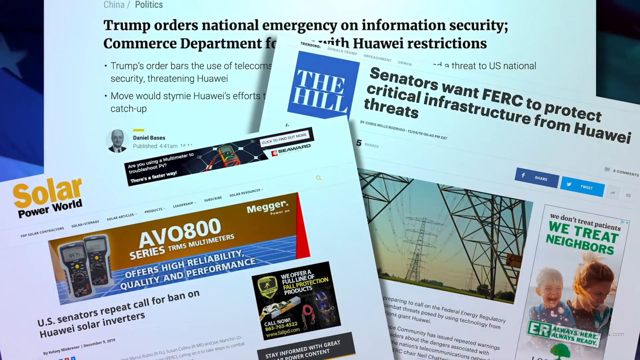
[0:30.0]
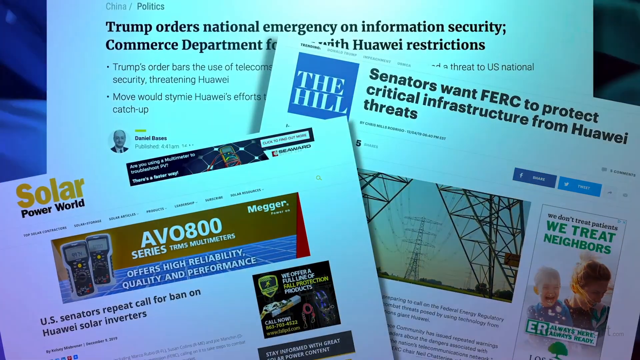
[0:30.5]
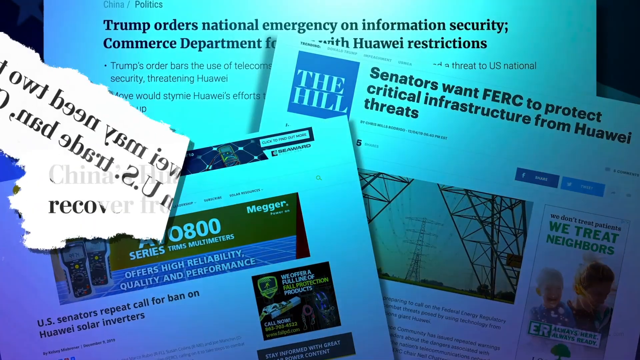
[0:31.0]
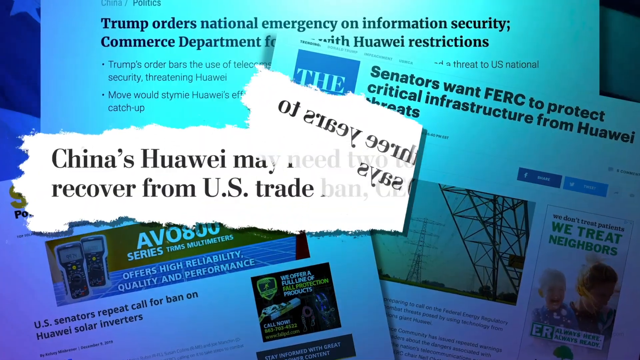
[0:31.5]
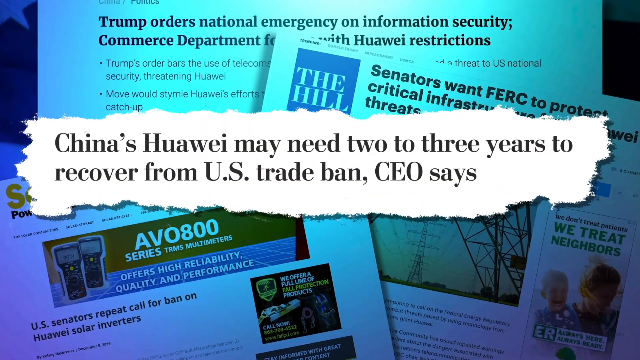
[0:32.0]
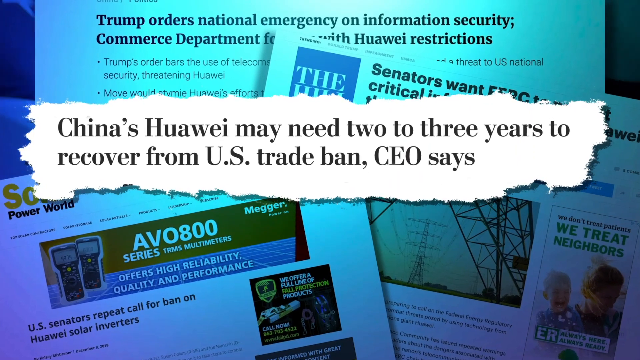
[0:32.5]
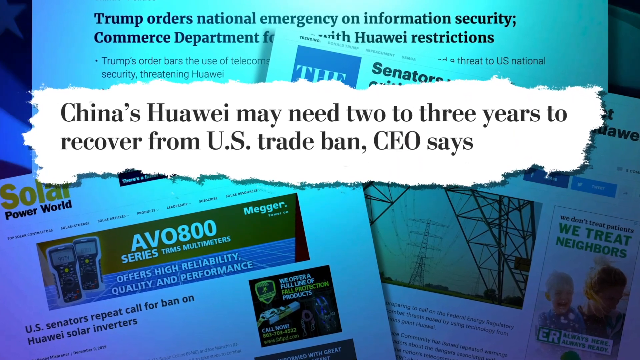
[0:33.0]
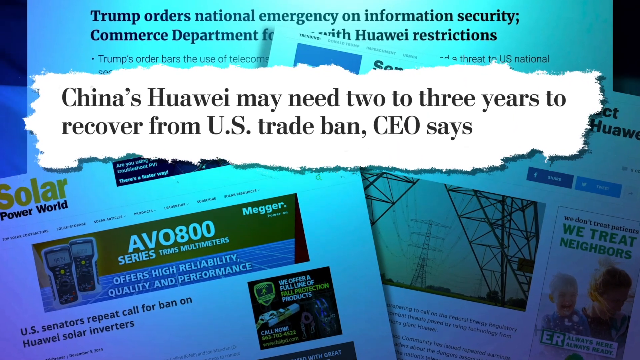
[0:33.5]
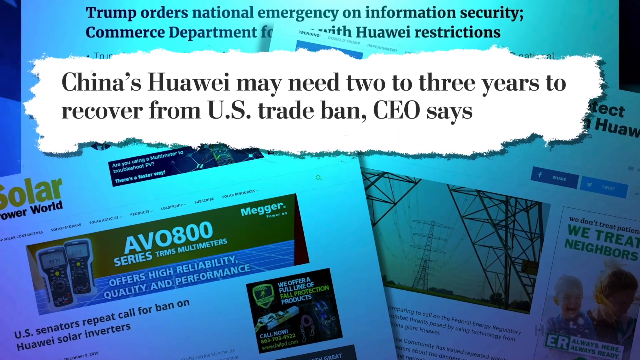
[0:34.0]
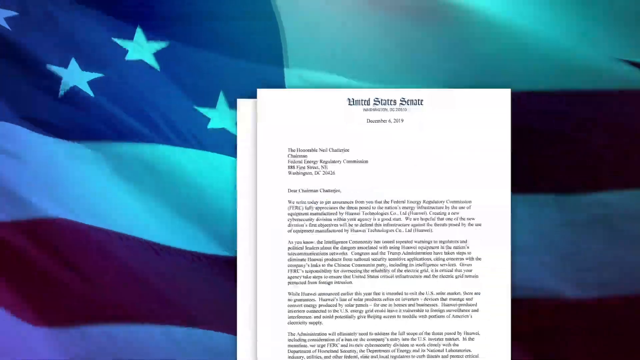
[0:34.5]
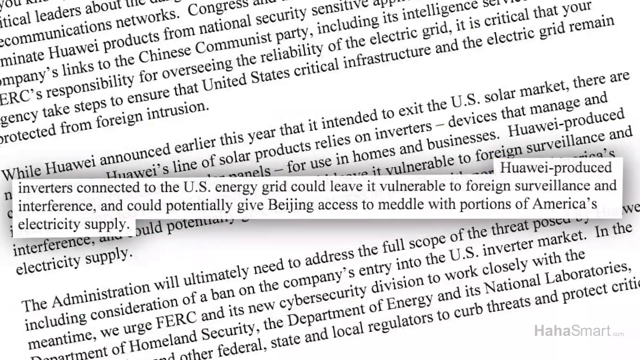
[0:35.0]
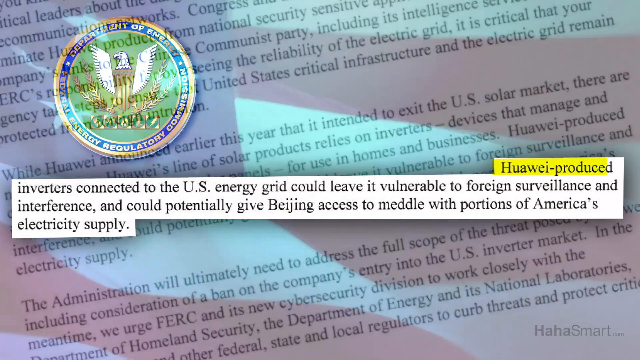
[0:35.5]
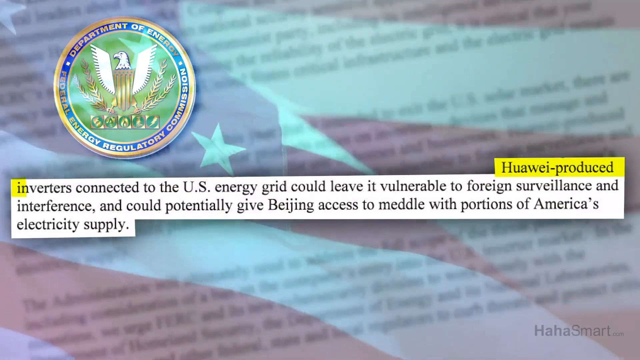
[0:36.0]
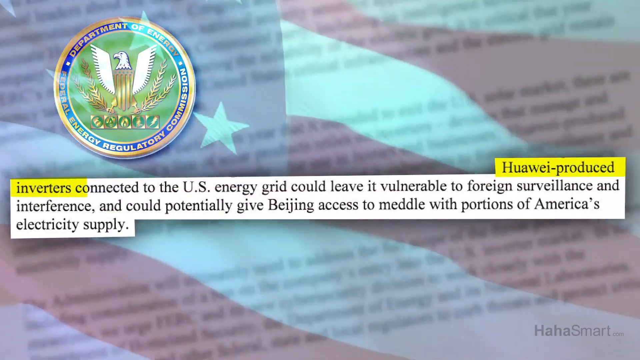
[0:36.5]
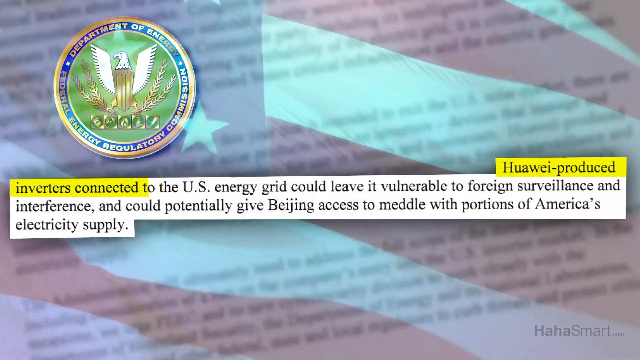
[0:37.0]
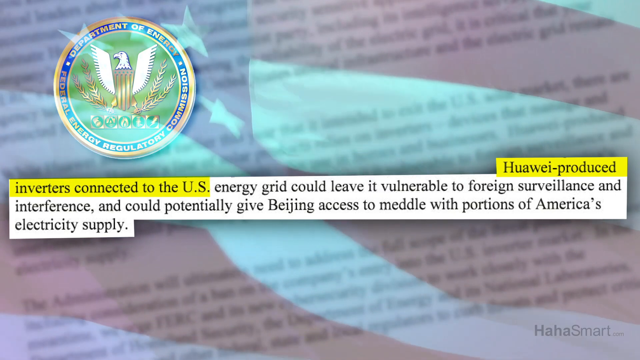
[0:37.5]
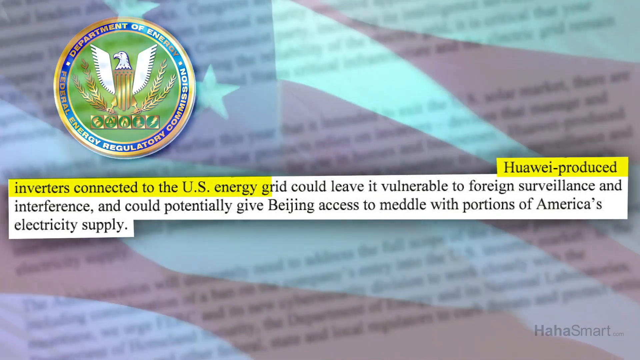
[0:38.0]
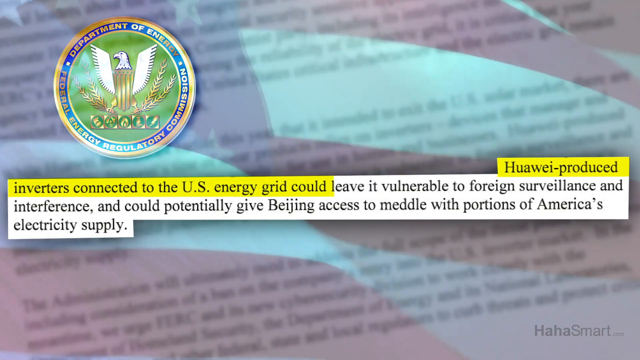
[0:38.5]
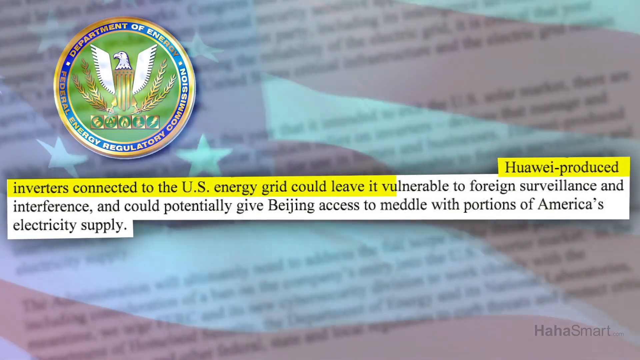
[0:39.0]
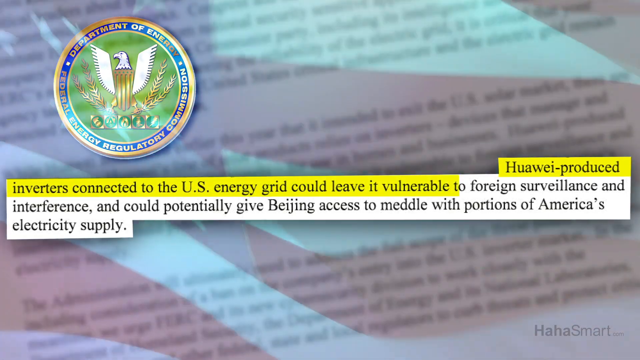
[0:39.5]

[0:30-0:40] The three articles are staggered but take up the entire screen. A paragraph from one of the articles is ripped out and comes to the front of the screen, reading "China's Huawei may need two or three years to recover from US trade ban, CEO says". It fades from the middle of the screen toward the top, and a new screen appears: a close-up of a letter with the United States flag waving in the background. Highlighted in yellow is "Huawei-produced inverters connected", and the rest of the text, not highlighted, reads "to the US energy grid could leave it vulnerable to foreign surveillances and interference, and could potentially give Beijing access to meddle with portions of America's electric supply". The letter is from the Department of Energy, with the seal above the text. The American flag waves in the background the whole time.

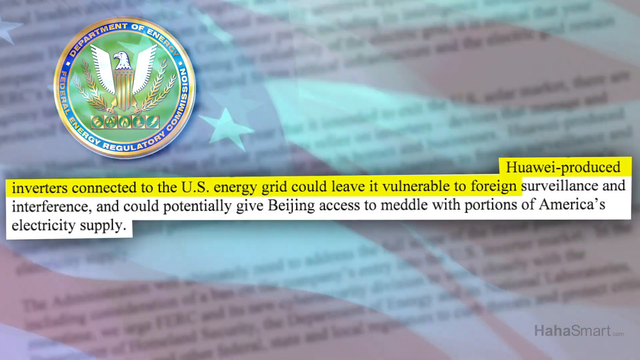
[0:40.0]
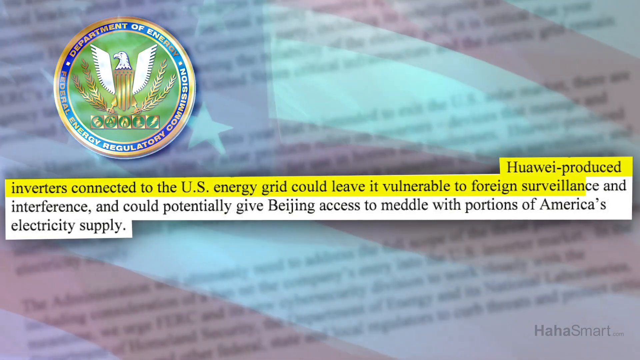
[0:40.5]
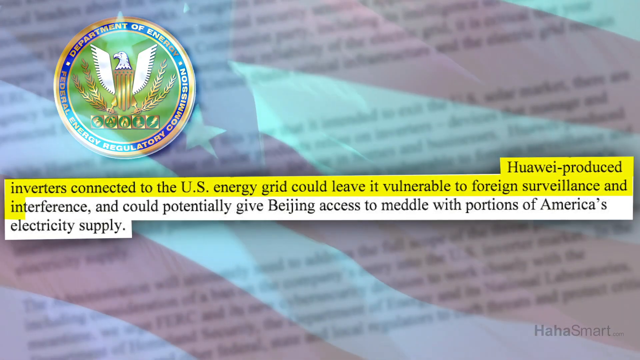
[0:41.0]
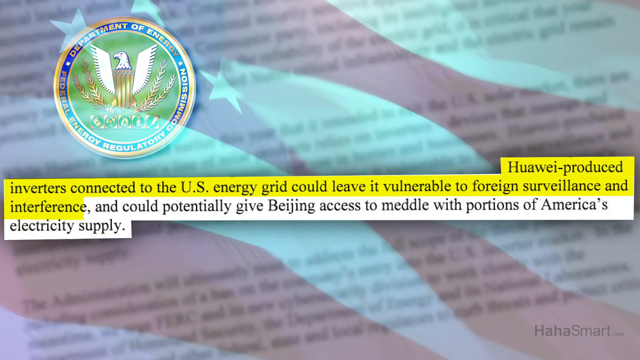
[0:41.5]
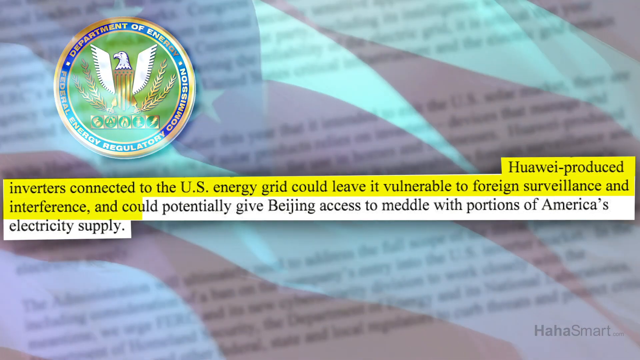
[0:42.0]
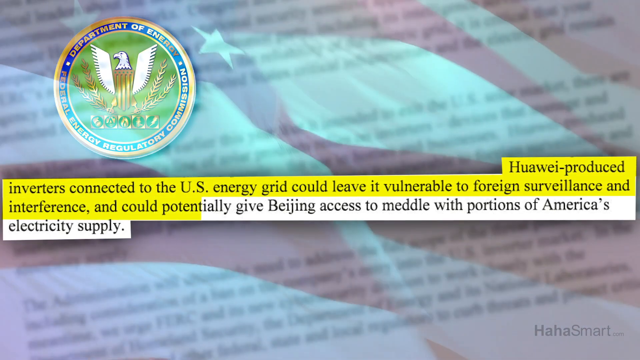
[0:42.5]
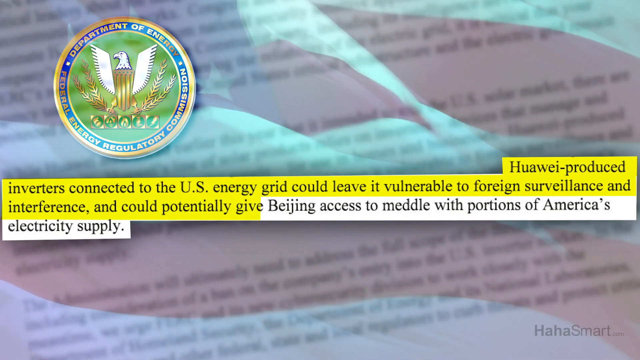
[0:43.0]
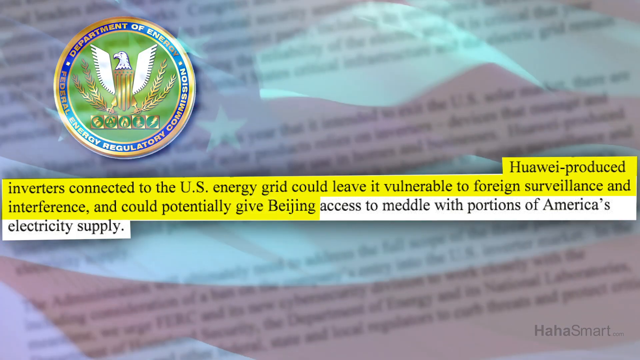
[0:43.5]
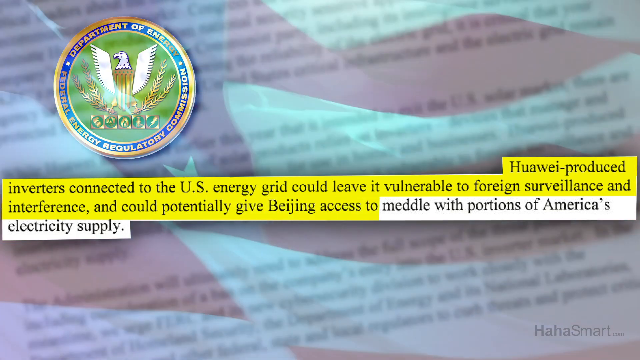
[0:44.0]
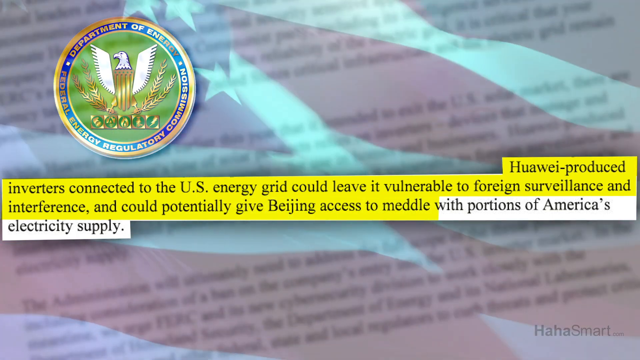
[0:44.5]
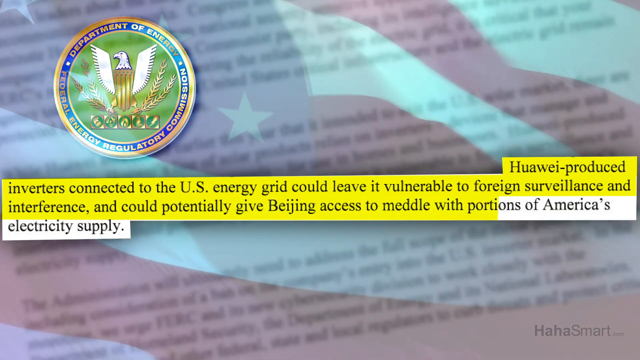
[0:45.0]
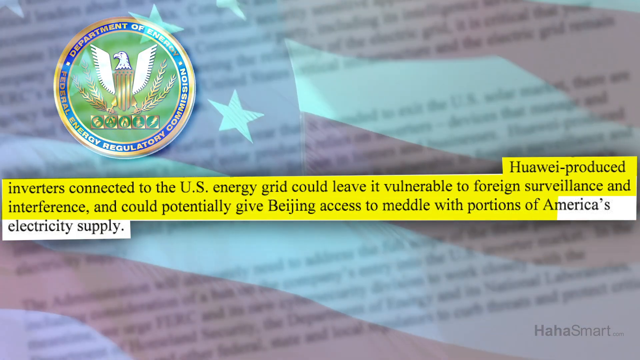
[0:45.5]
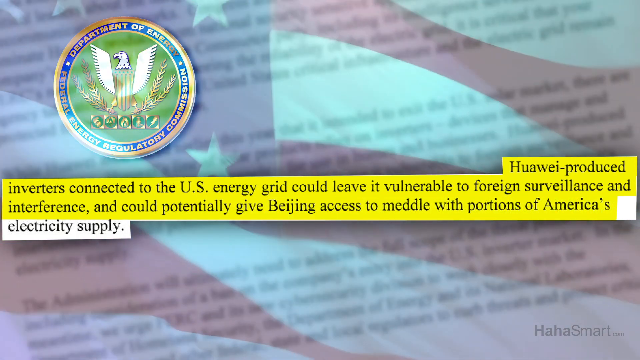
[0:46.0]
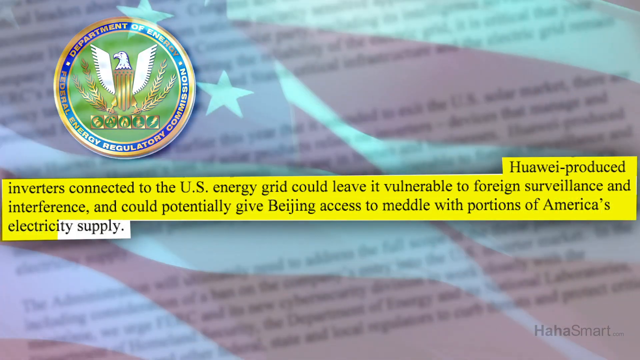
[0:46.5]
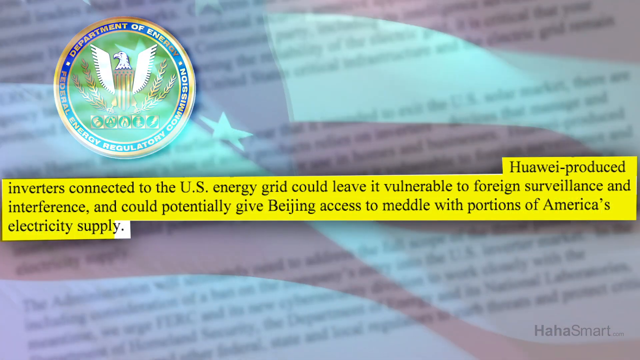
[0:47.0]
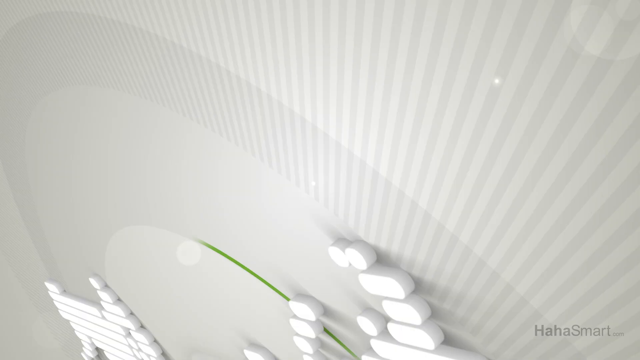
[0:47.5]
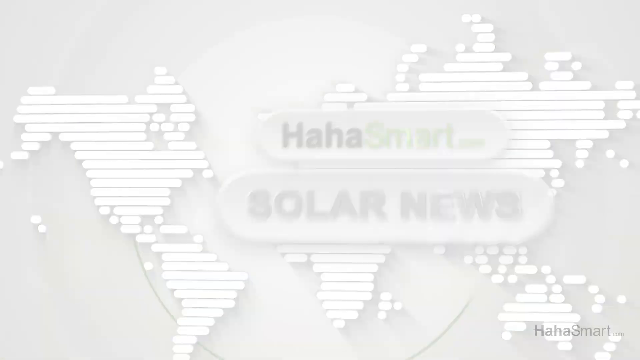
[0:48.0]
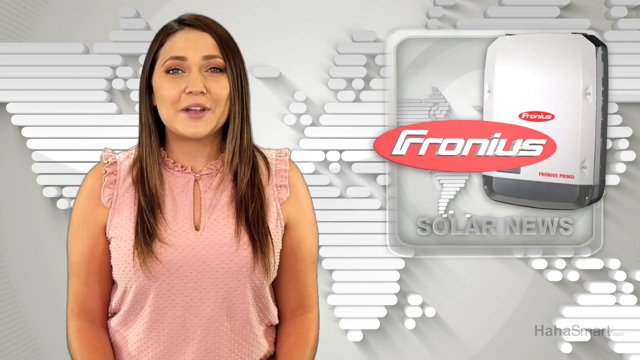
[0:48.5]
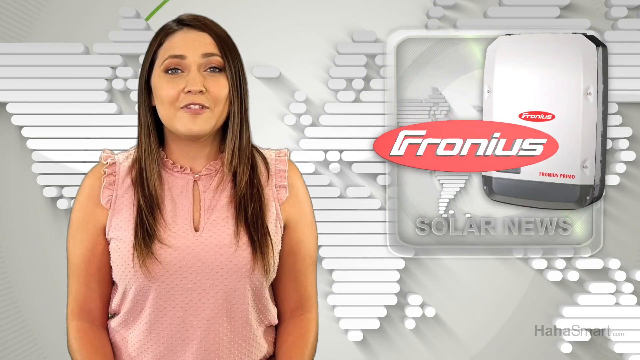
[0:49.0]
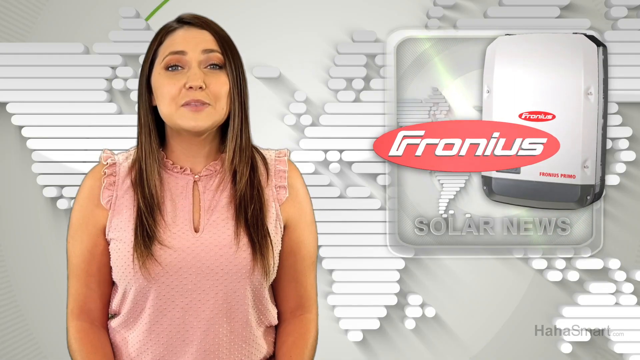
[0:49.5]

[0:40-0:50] The same text appears with the American flag waving in the background. The text is highlighted from left to right until the entire sentence is highlighted. A transition screen follows, showing the horizontal lines that make up the world map, and then fades out. Jessica is back, on the left side of the screen. On the right side there appears to be a logo reading "Fronius" in white letters inside a red oval, and there appears to be a panel box with the same logo on it; it is white with a little black strip at the bottom. This is inside a clear rectangular box, and below it is the text "solar news".